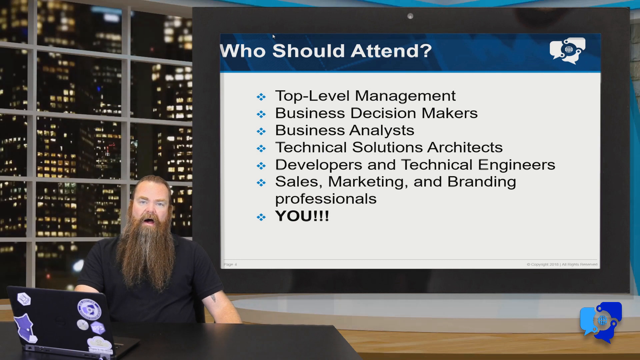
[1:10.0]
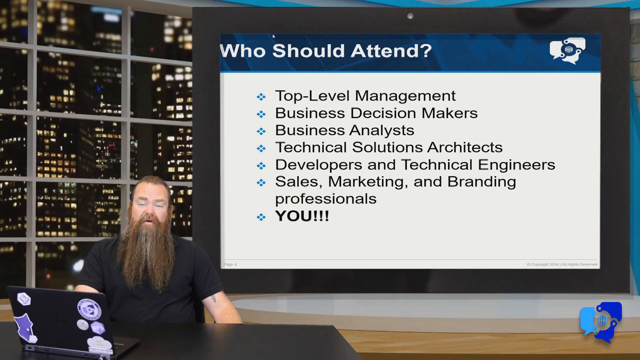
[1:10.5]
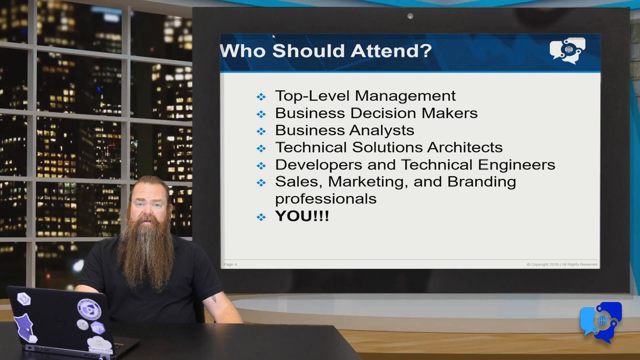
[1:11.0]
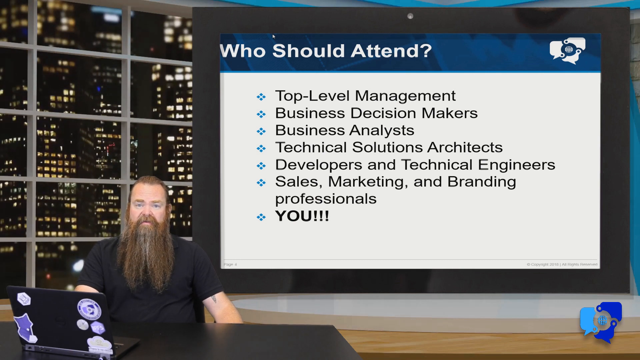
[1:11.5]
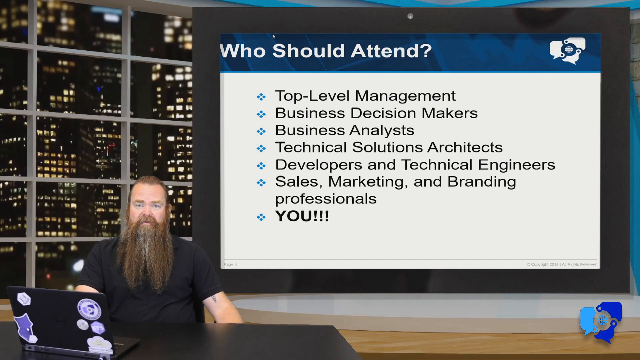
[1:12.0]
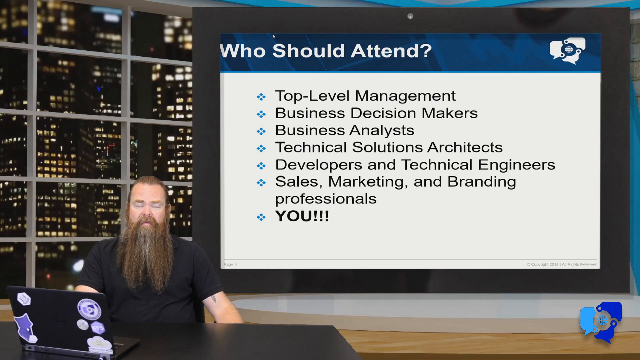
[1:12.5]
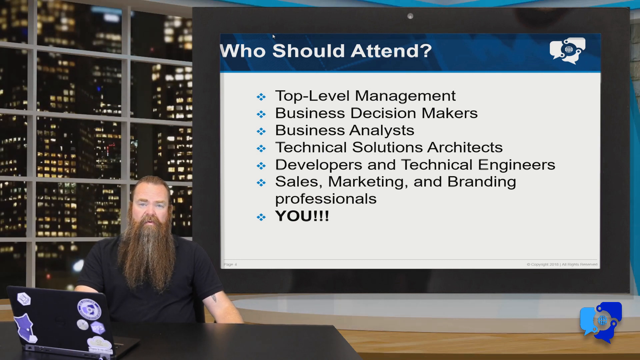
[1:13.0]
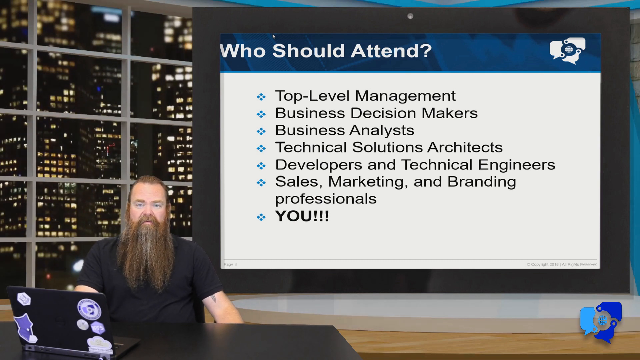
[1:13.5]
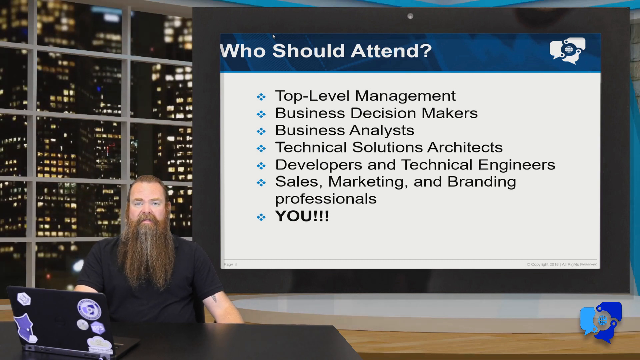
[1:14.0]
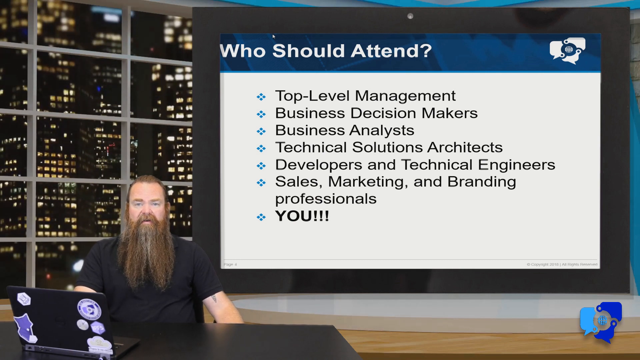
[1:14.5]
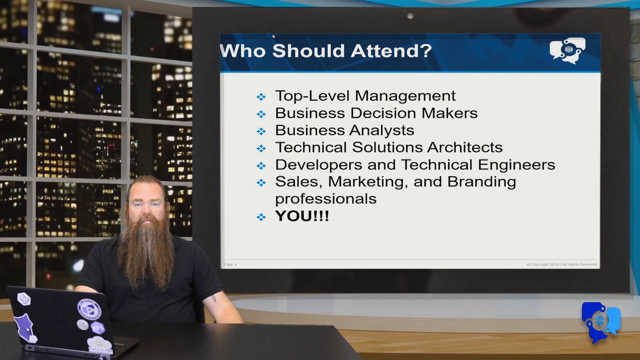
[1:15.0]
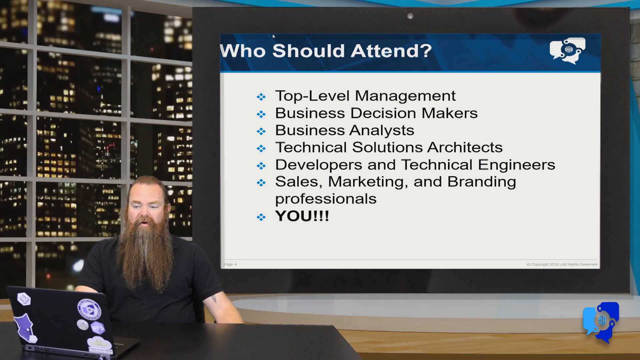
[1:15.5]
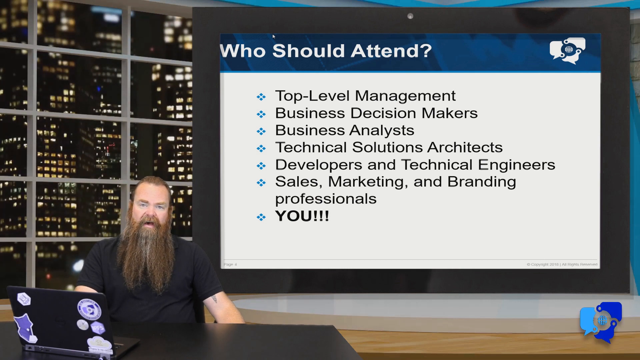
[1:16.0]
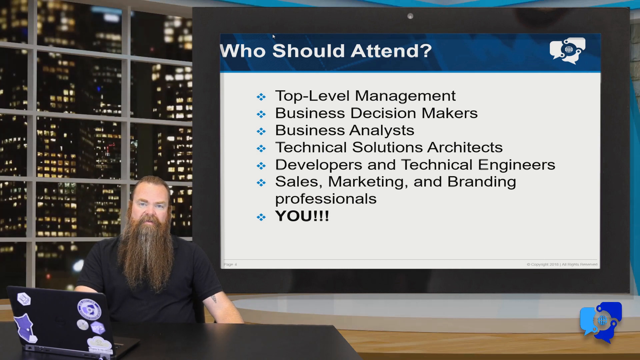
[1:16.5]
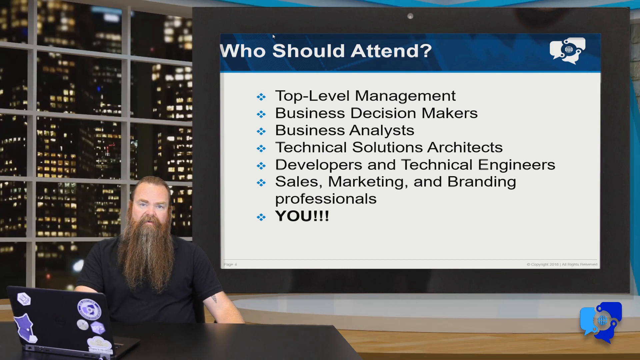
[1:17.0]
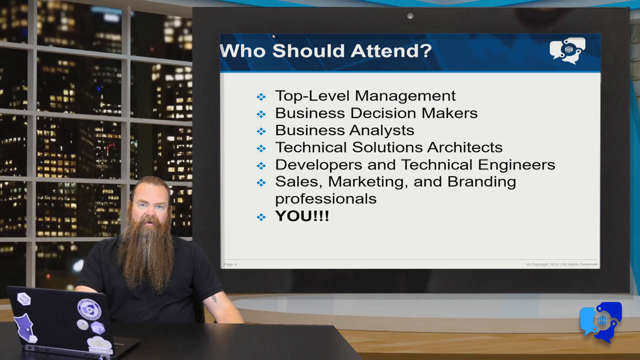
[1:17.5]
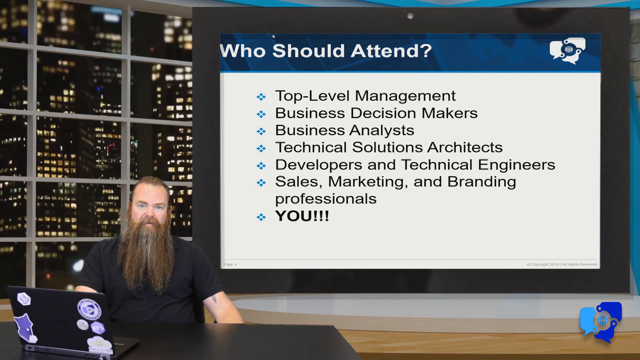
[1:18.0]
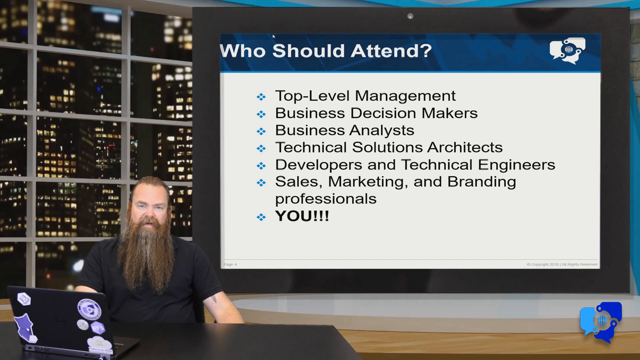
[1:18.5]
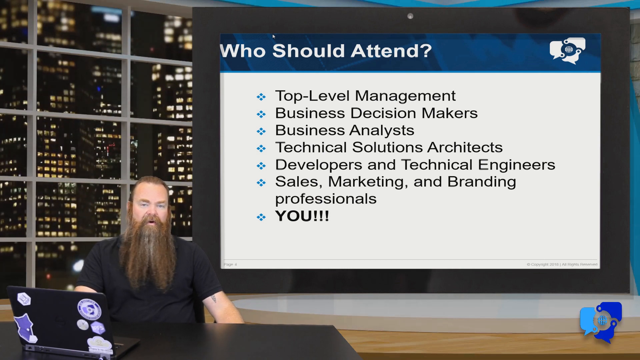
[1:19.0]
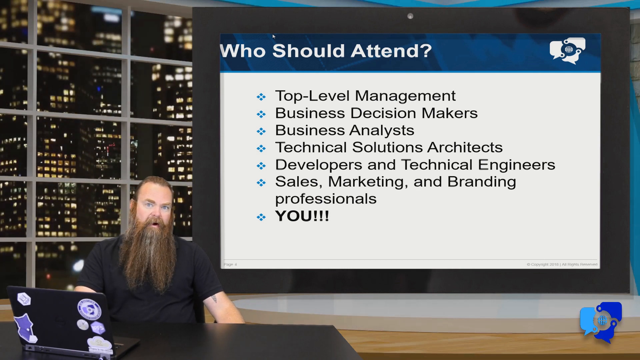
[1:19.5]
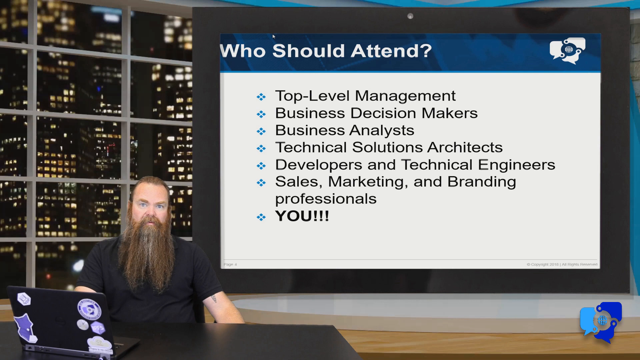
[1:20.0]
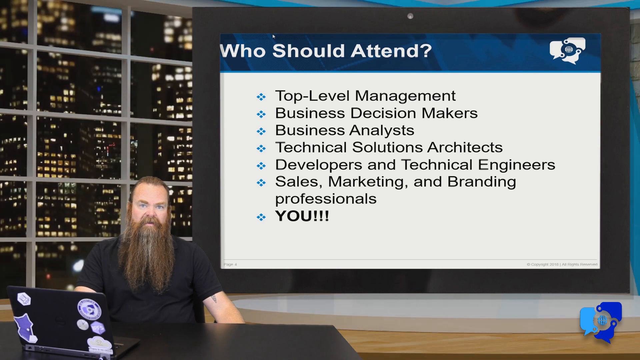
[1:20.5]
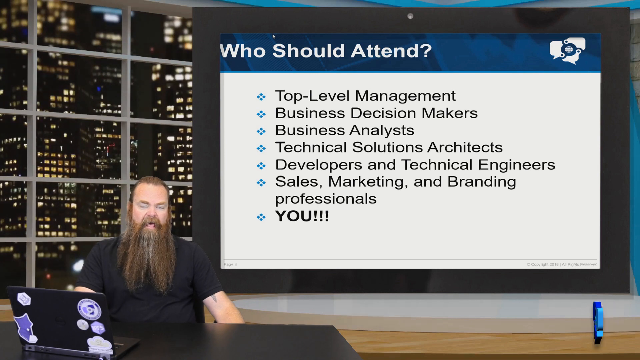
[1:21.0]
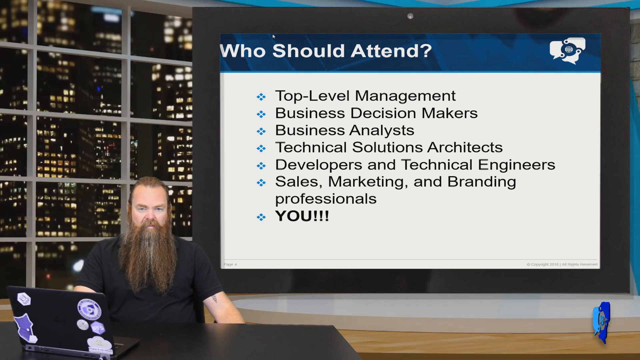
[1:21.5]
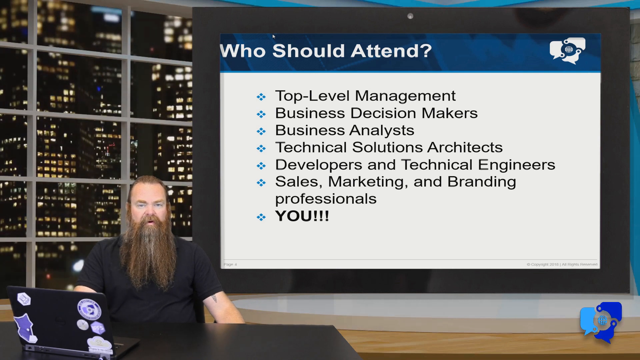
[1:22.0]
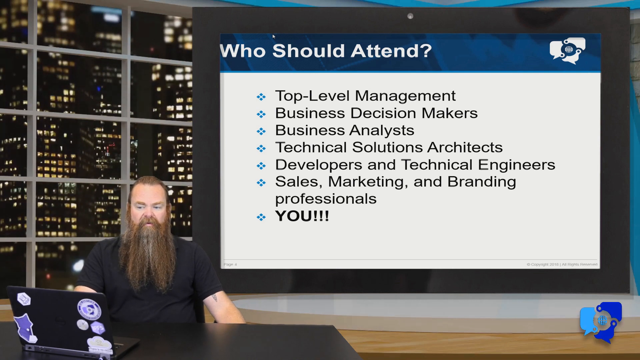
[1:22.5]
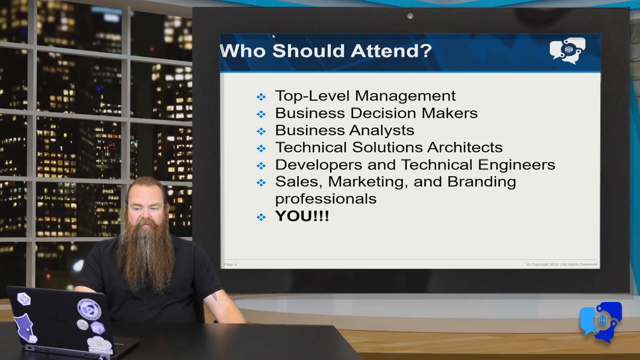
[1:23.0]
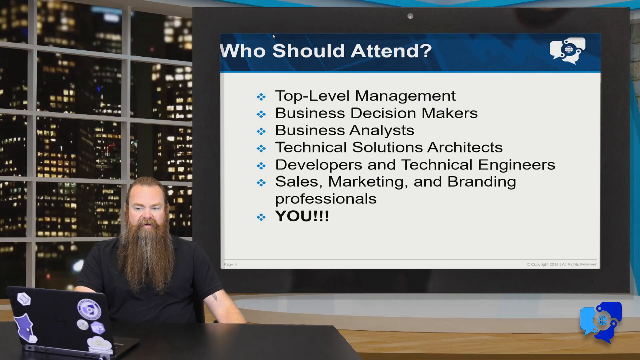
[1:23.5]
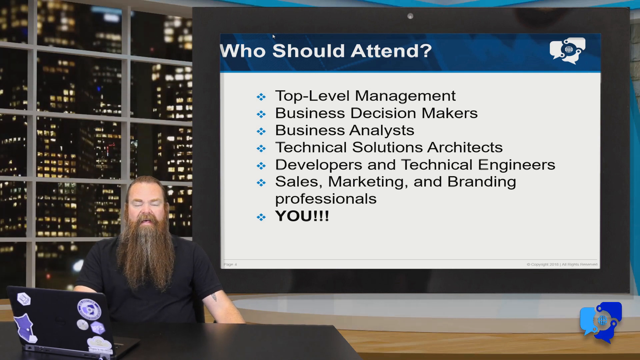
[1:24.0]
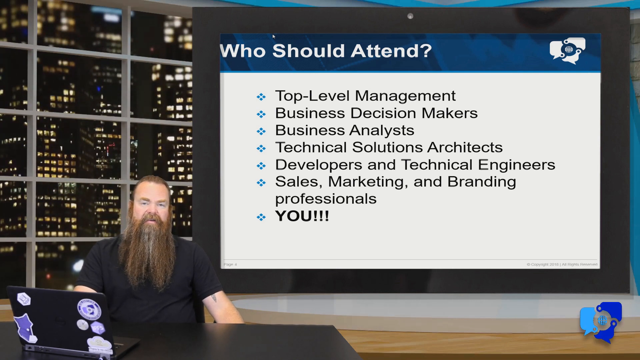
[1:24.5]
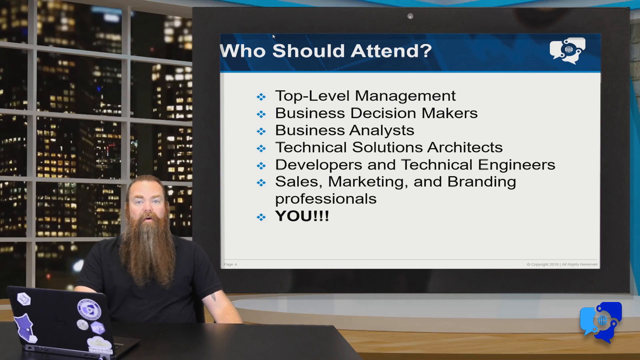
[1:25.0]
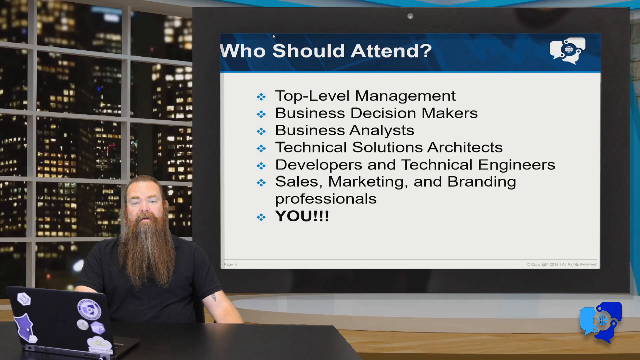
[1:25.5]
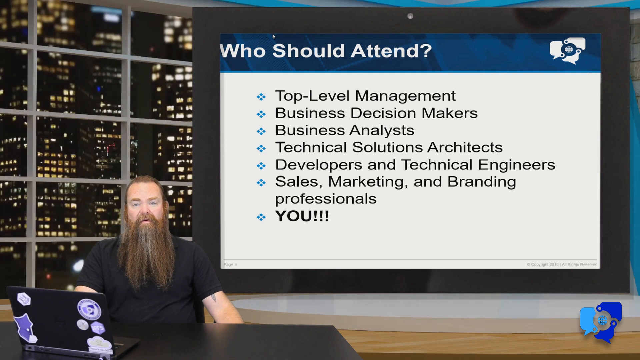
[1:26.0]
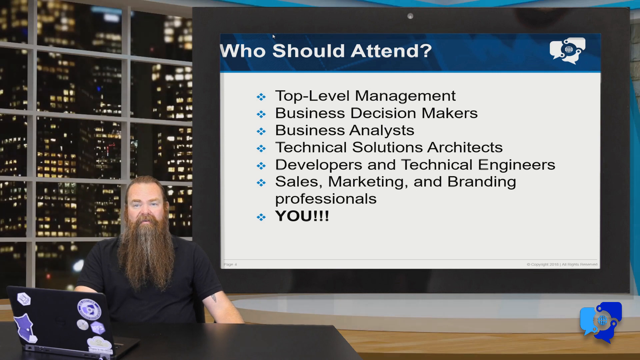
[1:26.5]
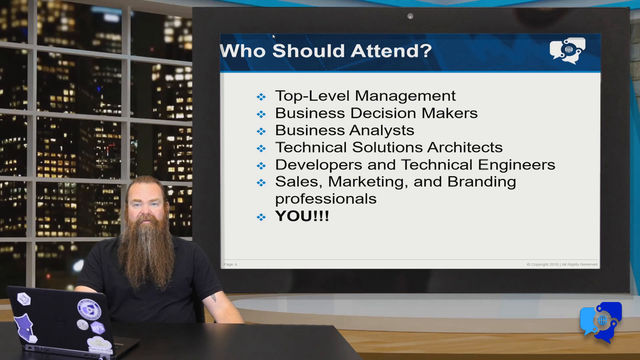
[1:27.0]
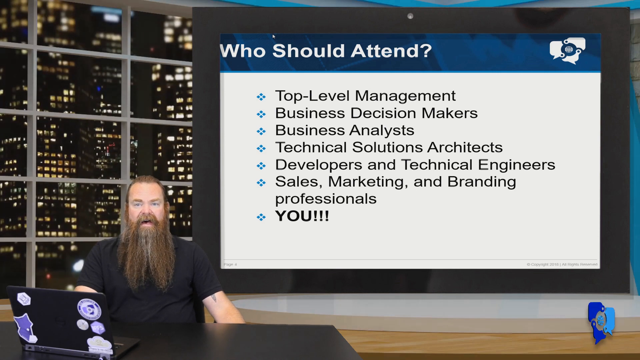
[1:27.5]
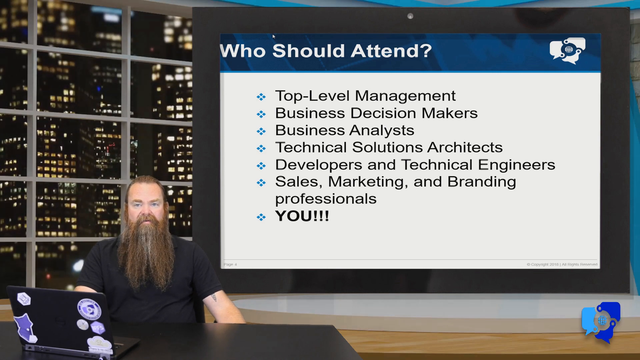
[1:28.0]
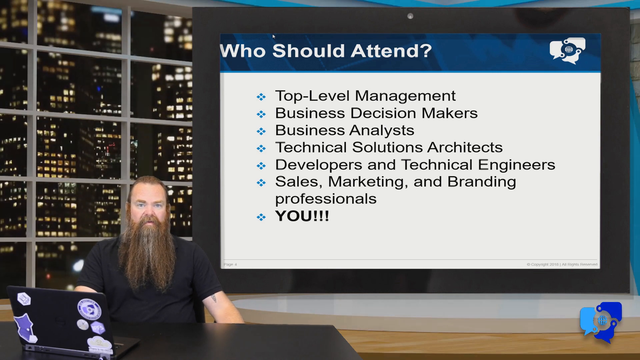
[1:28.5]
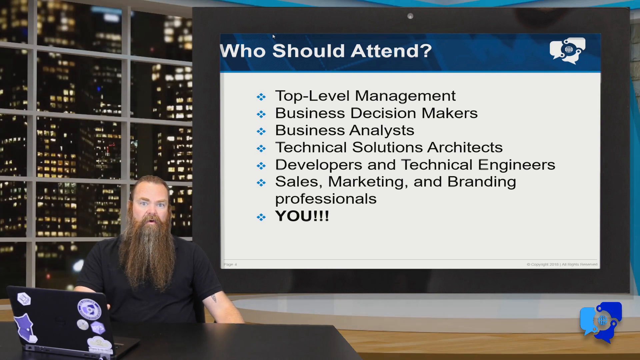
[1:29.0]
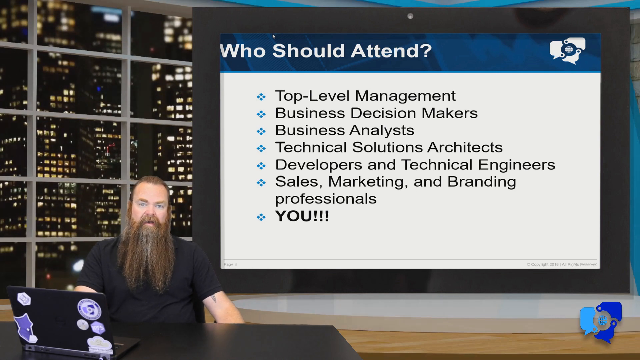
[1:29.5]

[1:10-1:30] A message on the screen about who should attend lists top-level management, business decision makers, business analysts, technical solutions architects, developers and technical engineers, sales, marketing, and branding professionals, and last, "you", with a few exclamation points beside it. Each item has a blue bullet point beside it. The host is shown on the left with a long beard separated in the middle, a black t-shirt and his hair pulled back into a ponytail. He is sitting in front of a laptop covered in mostly purple stickers. In the lower right-hand corner, an emblem rotates occasionally, showing a planet in the middle of three strange figures, two dark blue and one light blue.